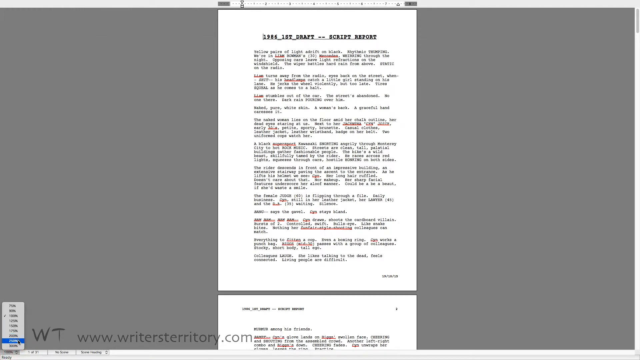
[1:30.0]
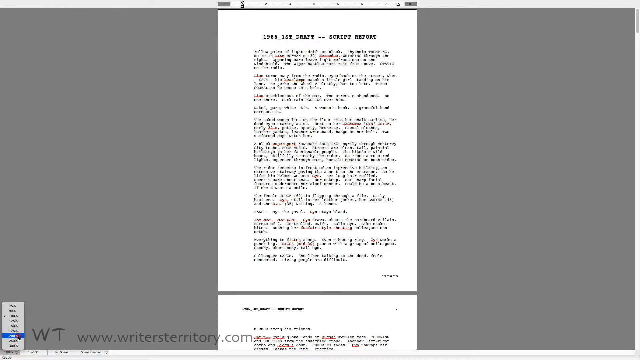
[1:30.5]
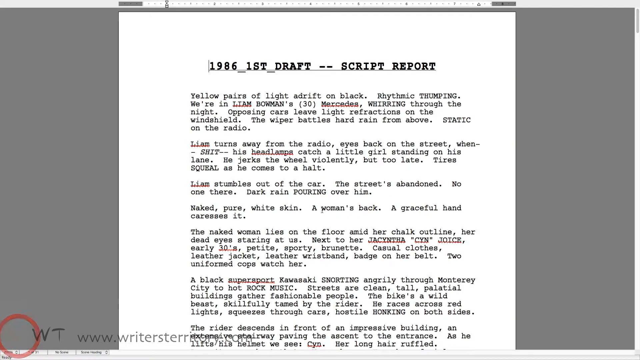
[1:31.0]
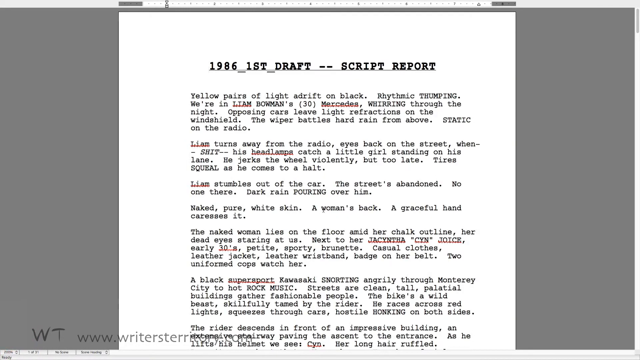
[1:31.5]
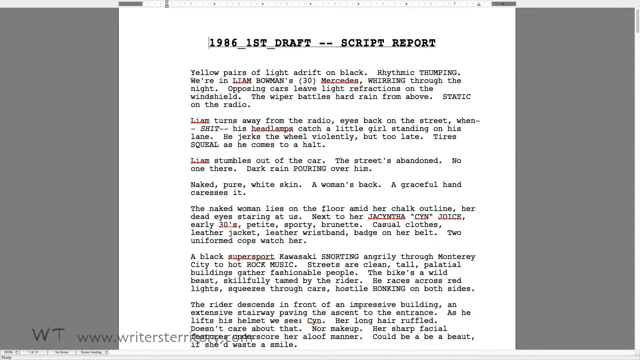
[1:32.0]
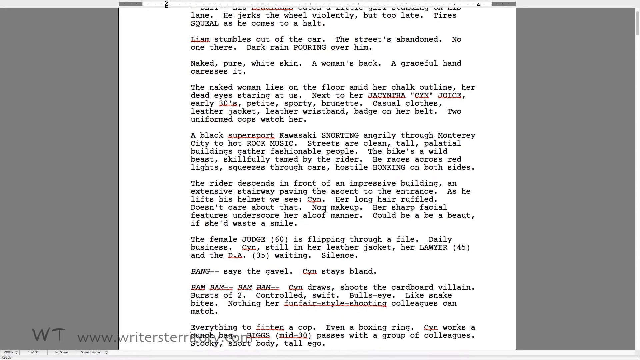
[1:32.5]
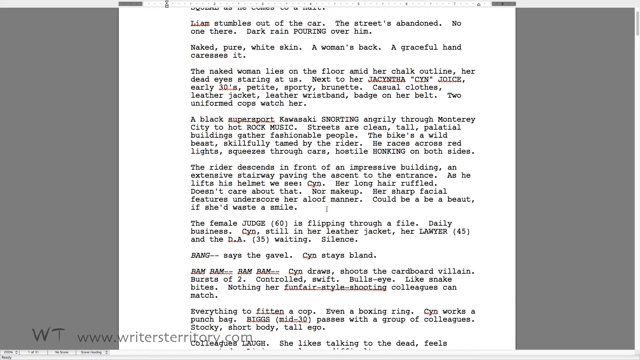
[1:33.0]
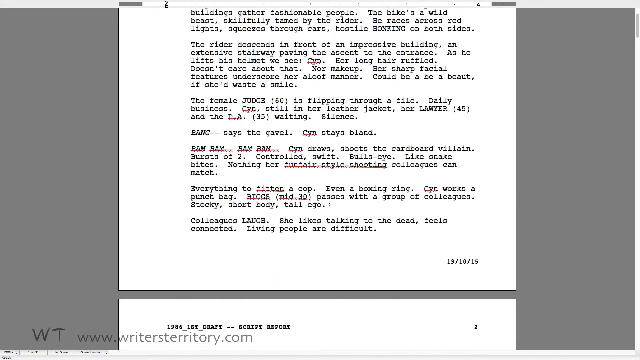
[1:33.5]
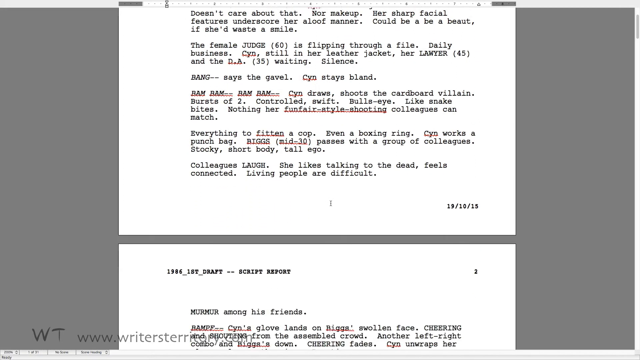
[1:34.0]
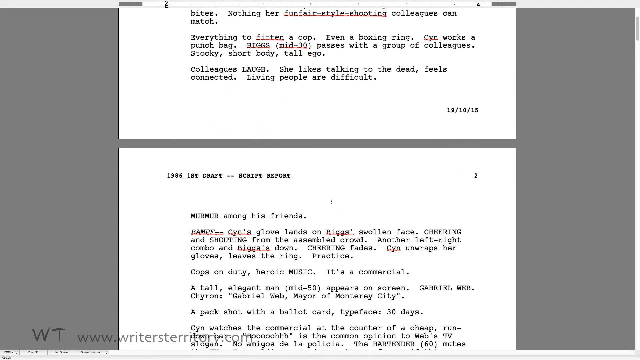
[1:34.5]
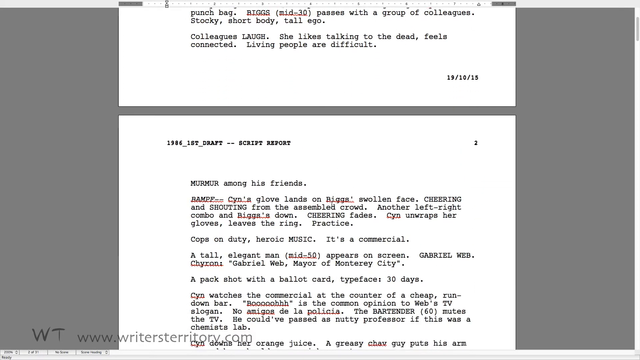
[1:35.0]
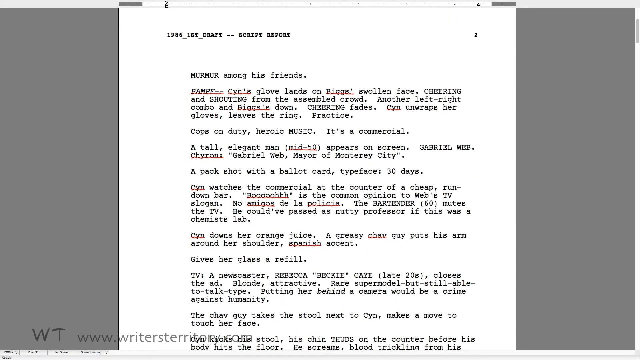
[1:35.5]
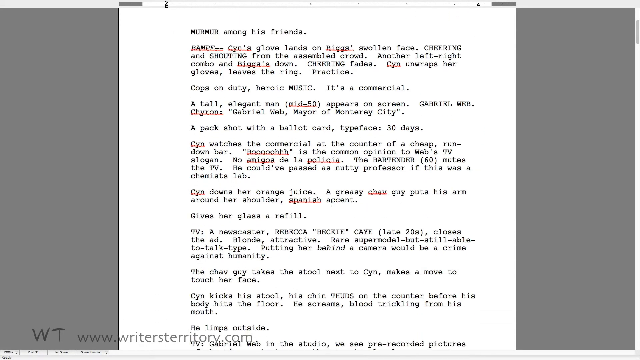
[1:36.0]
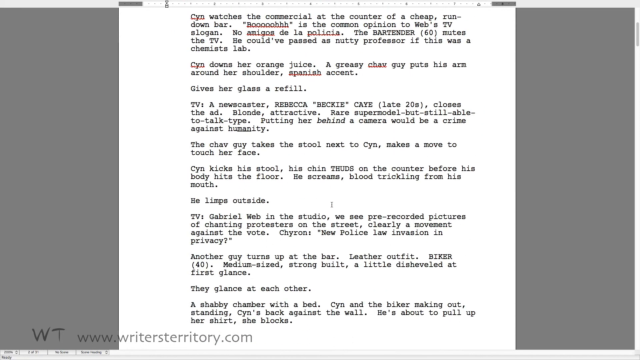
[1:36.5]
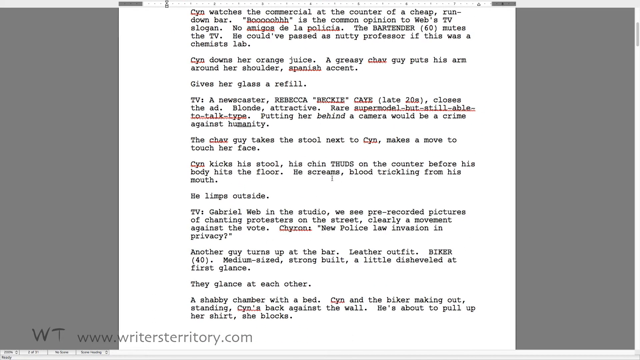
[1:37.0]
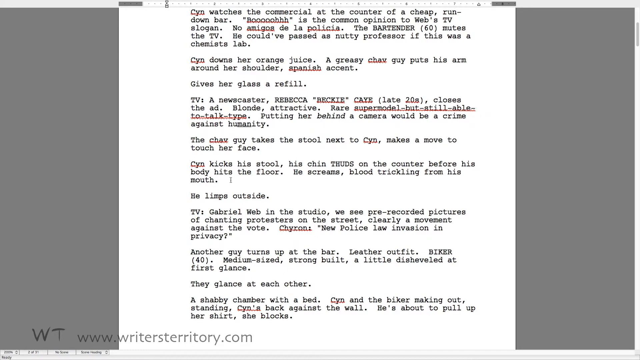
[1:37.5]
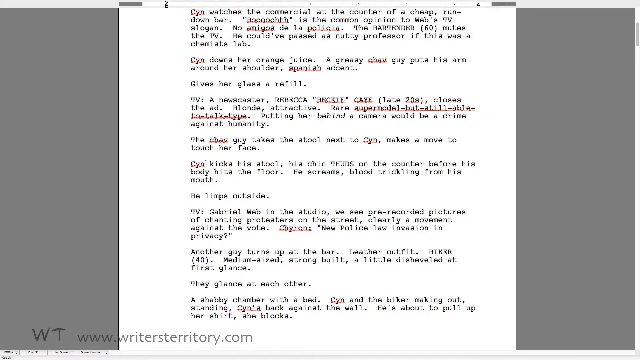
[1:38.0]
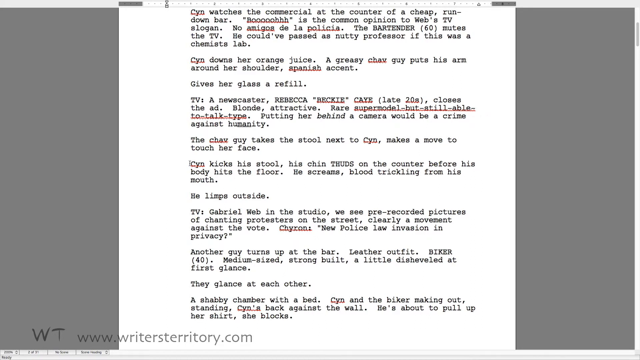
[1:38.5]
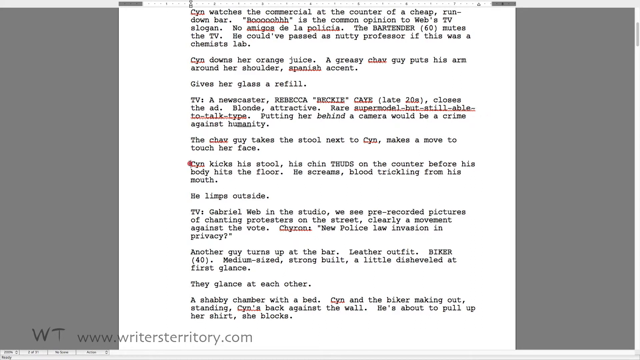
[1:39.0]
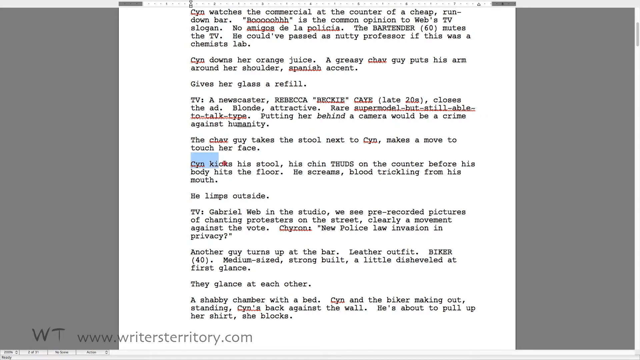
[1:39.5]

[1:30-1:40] The document is so zoomed out that the text is blurred and the body cannot be read; only the top is legible, showing "1984_first_draft". The user zooms in using the control at the bottom left, making the text easier to see. The margin at the top is visible, indented about three quarters. The heading now reads as a "1986 first draft". He scrolls down; several words are marked as errors, such as "super sport" and "CYN". A date appears at the bottom right, and the page number at the top right. He seems to scroll down about three pages and apparently highlights "CYN kicks".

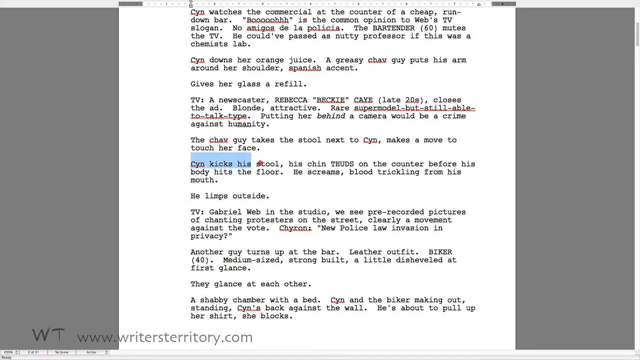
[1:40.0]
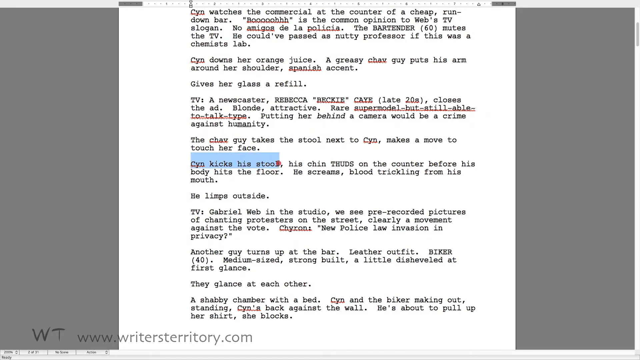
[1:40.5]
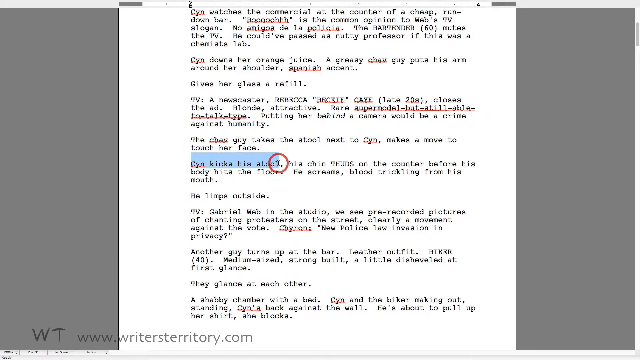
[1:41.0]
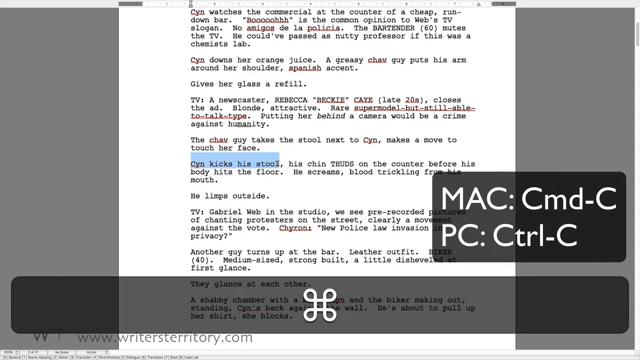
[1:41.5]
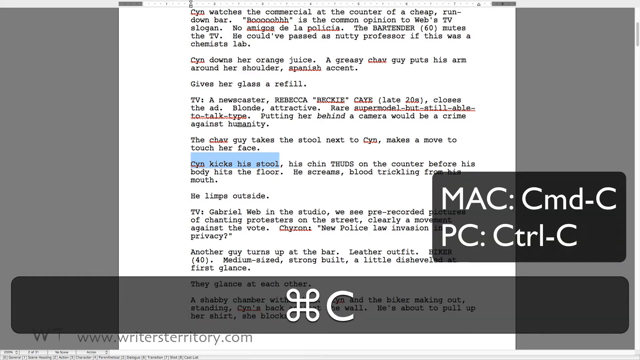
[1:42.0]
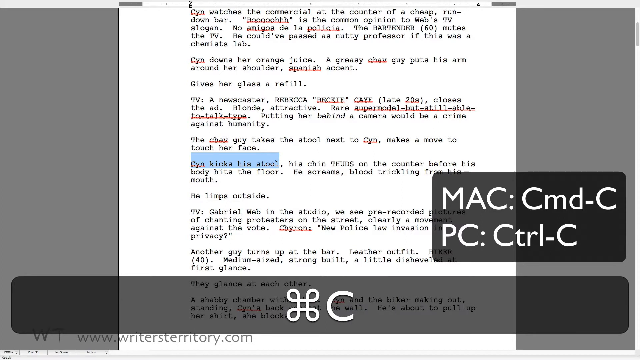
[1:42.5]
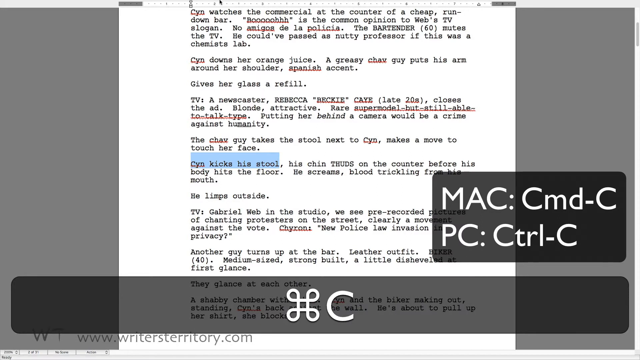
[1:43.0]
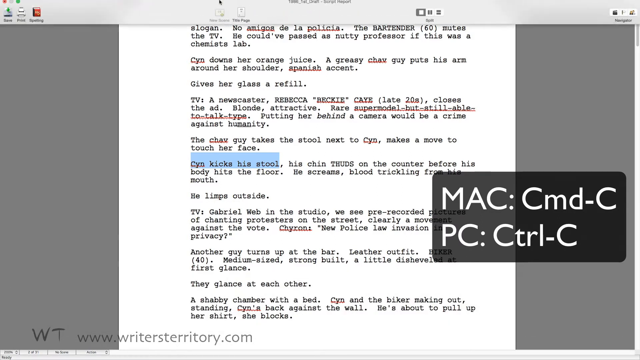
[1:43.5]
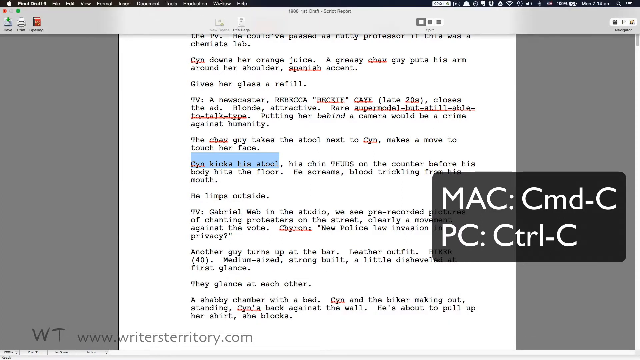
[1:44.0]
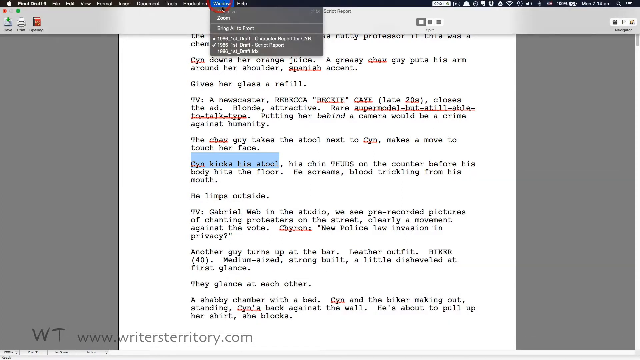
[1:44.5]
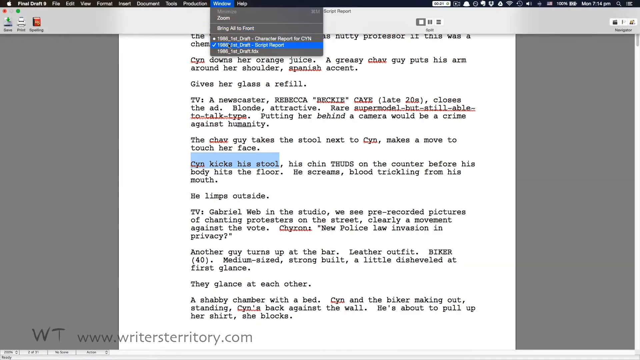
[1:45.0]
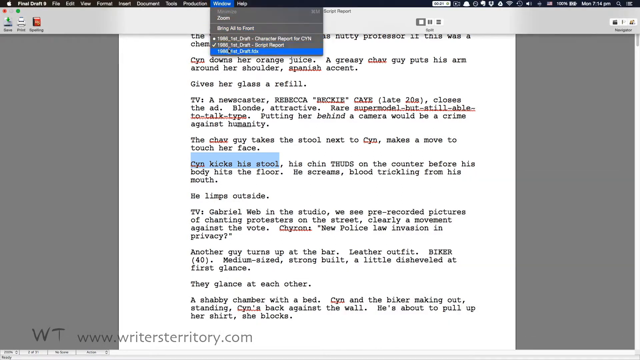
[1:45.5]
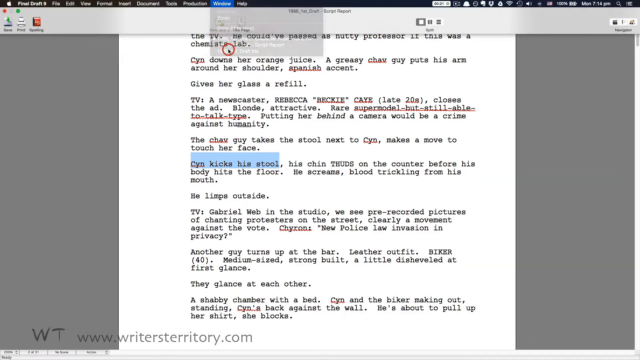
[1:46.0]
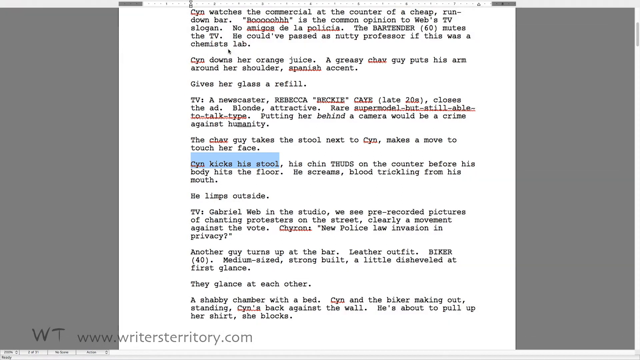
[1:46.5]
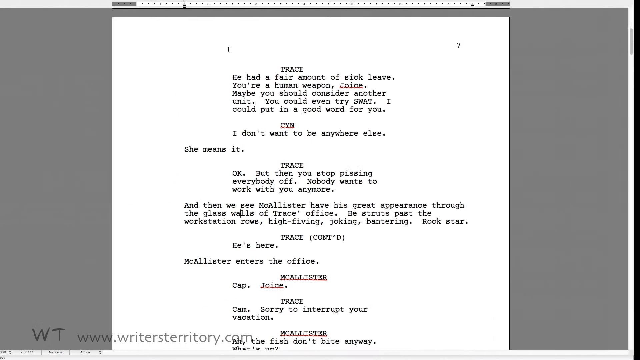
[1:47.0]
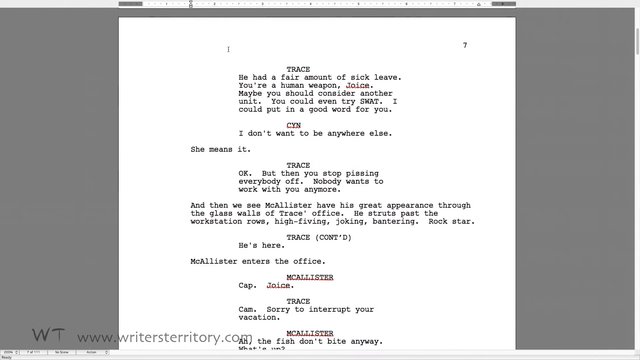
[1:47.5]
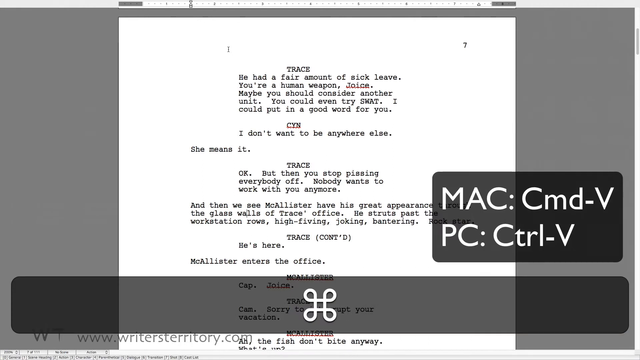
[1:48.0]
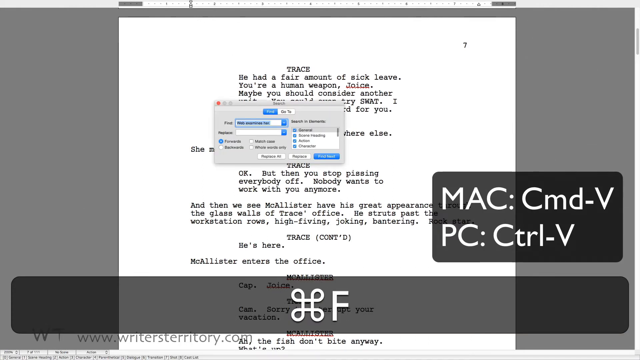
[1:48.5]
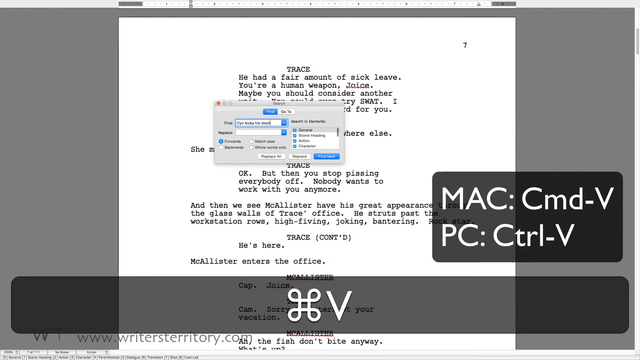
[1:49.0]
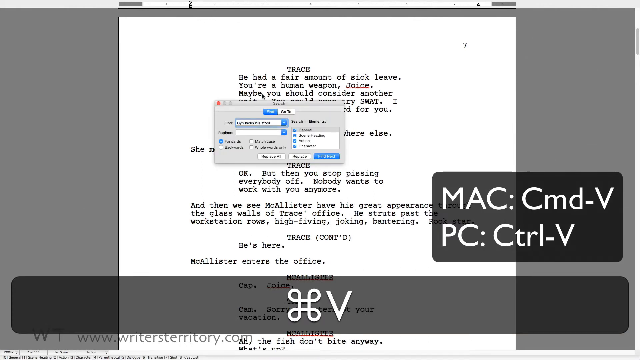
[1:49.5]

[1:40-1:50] The user highlights "CYN kicks" along with the space just above it; the selection apparently stops at "kicks a stool". As he stops, the red circle appears again, starting small, growing larger, and disappearing. An overlay then appears at the bottom right, flush against the right side, reading "Mac CMD C" with "PC control C" beneath it. At the bottom, a symbol of looped double vertical lines followed by a C appears and moves toward the top. He clicks at the top of the screen, bringing down a list of options for the document. He opens the window menu, which shows about five options, and clicks the last one, the first draft file, apparently ".FDX". This returns him to the trace document. A pop-up with "find" and "go" options appears, with "find" highlighted in blue. He types something, apparently pasting the copied text.